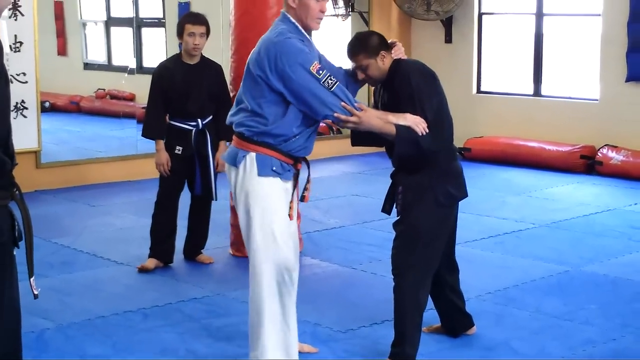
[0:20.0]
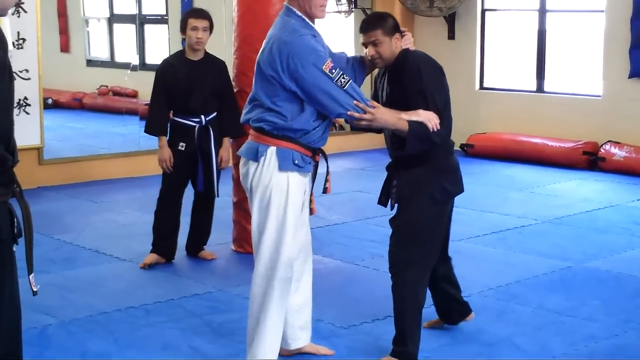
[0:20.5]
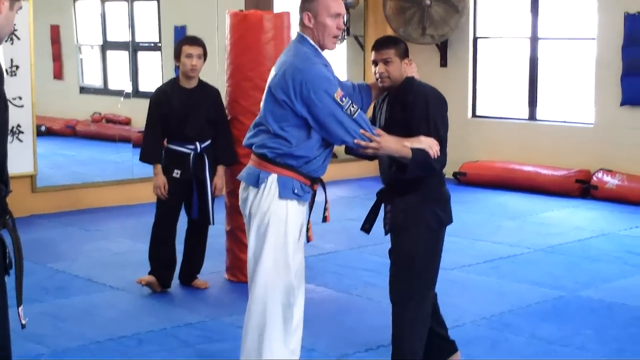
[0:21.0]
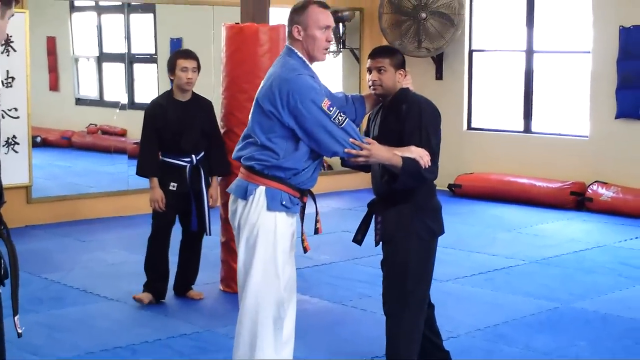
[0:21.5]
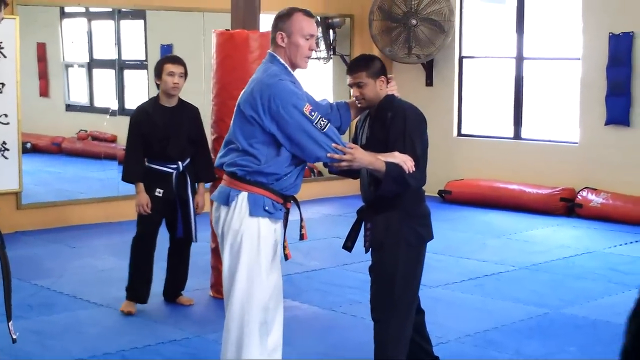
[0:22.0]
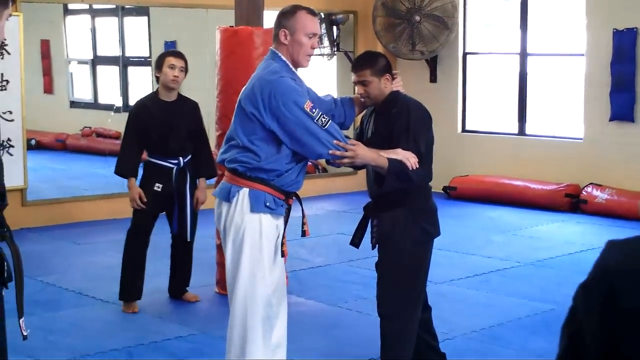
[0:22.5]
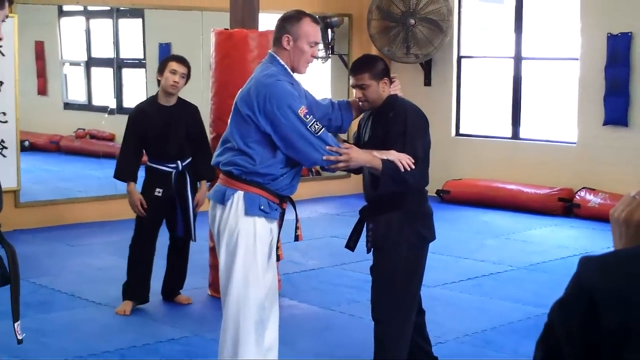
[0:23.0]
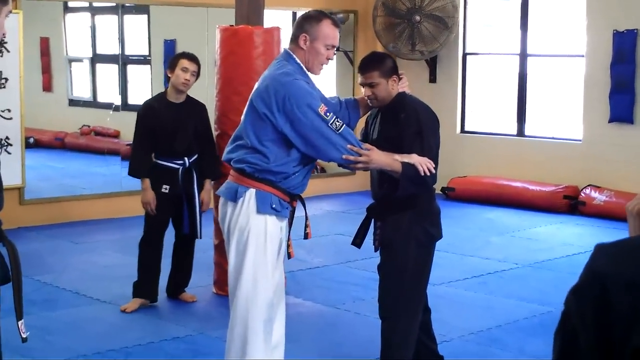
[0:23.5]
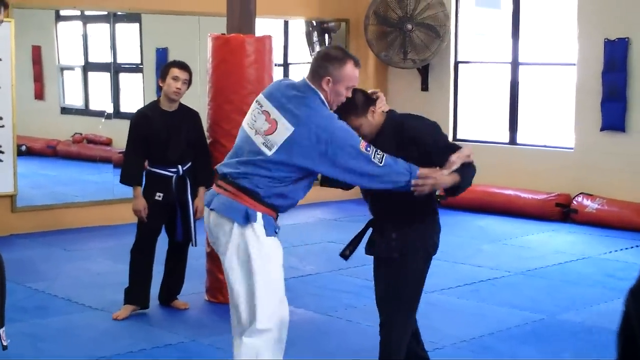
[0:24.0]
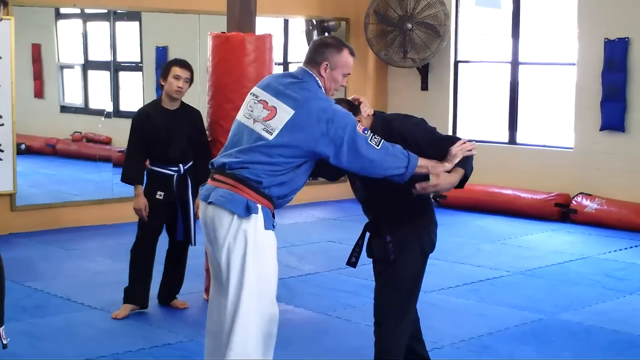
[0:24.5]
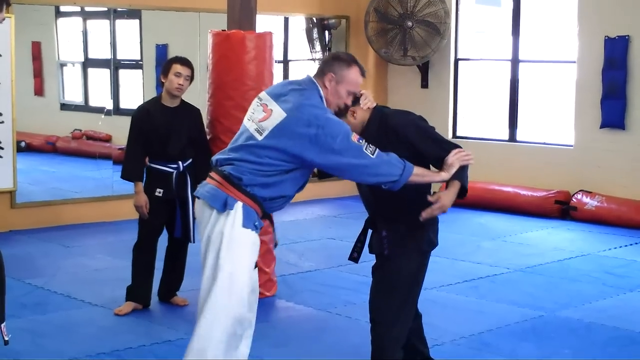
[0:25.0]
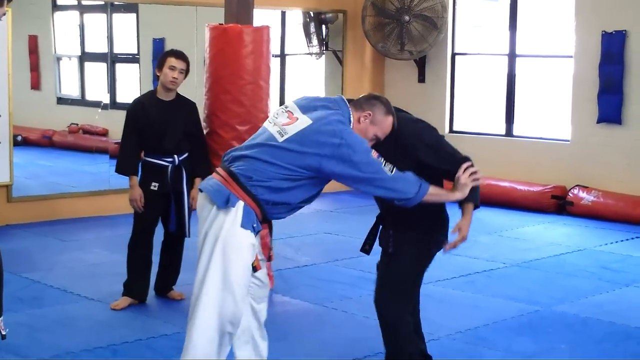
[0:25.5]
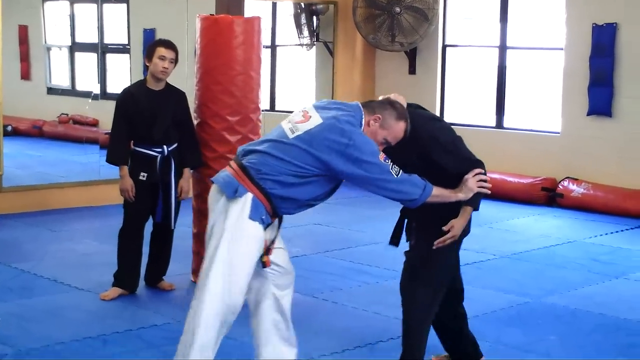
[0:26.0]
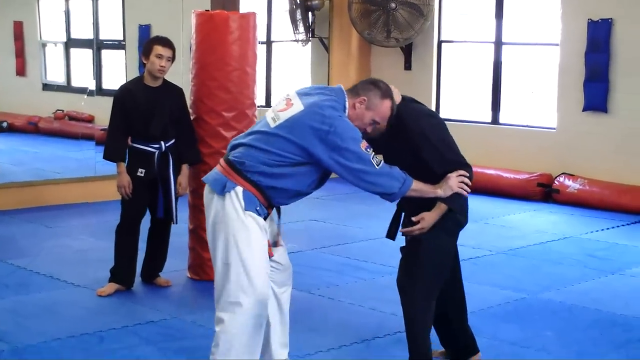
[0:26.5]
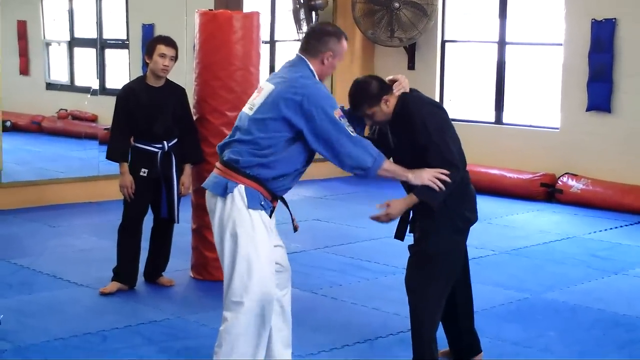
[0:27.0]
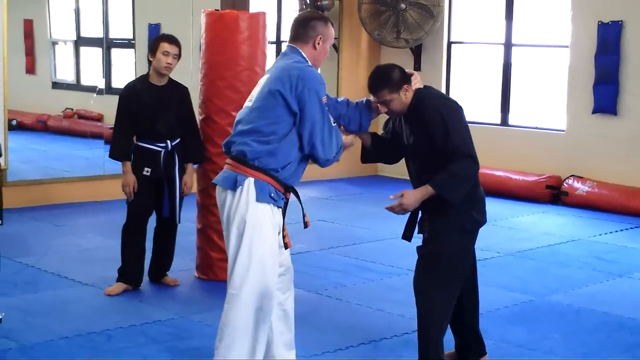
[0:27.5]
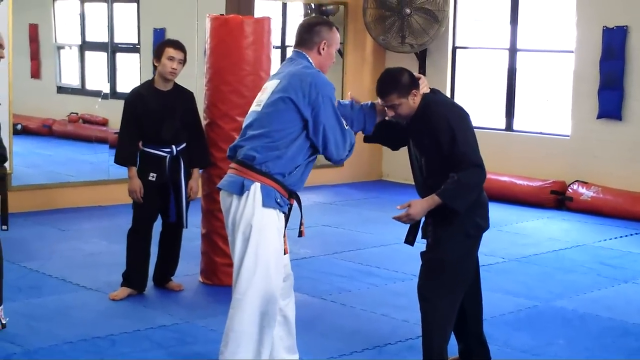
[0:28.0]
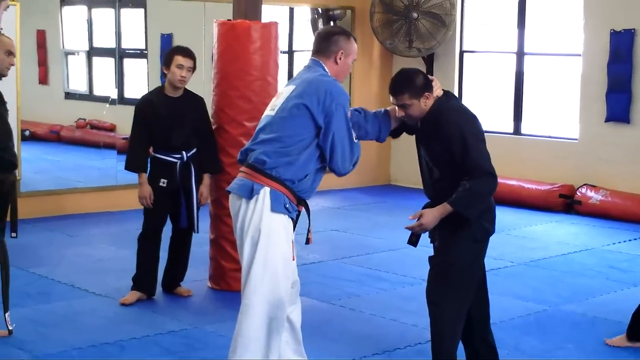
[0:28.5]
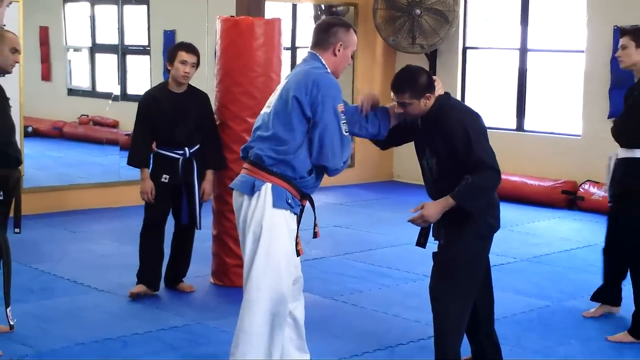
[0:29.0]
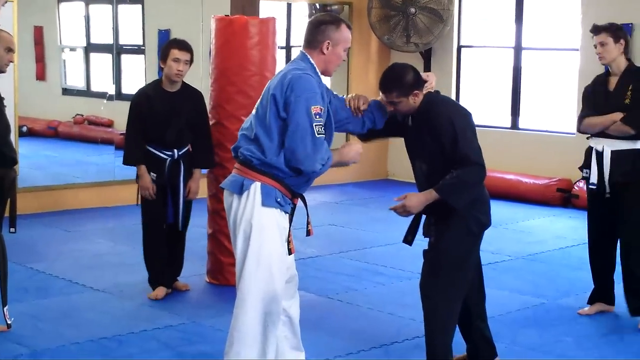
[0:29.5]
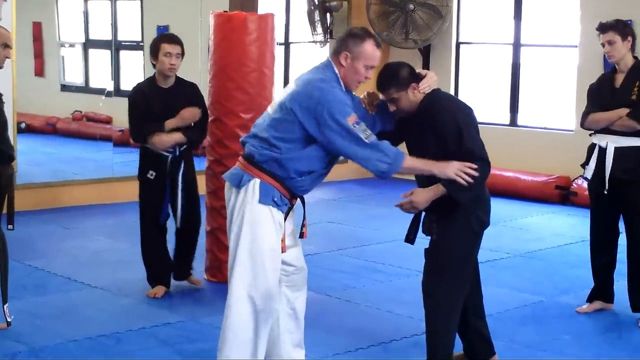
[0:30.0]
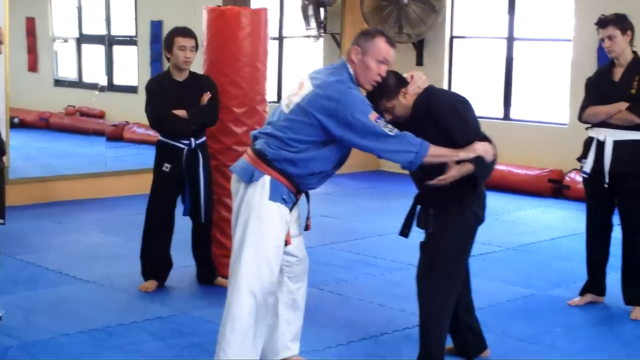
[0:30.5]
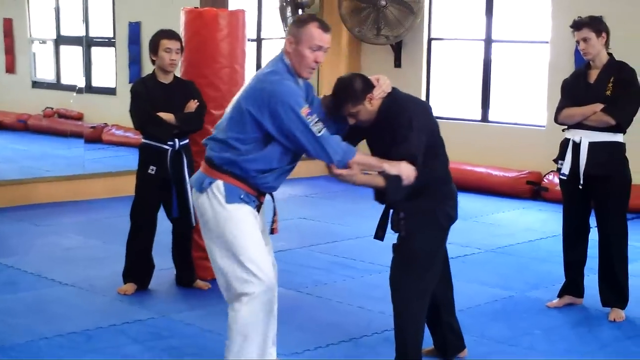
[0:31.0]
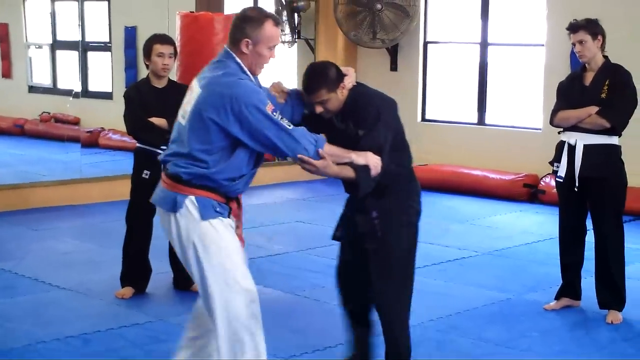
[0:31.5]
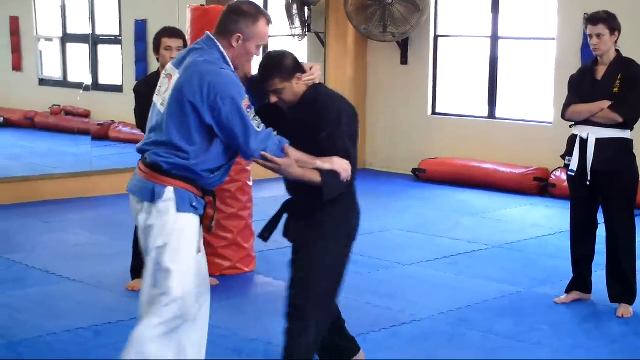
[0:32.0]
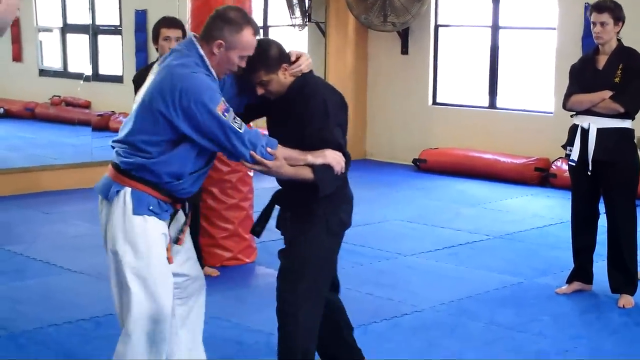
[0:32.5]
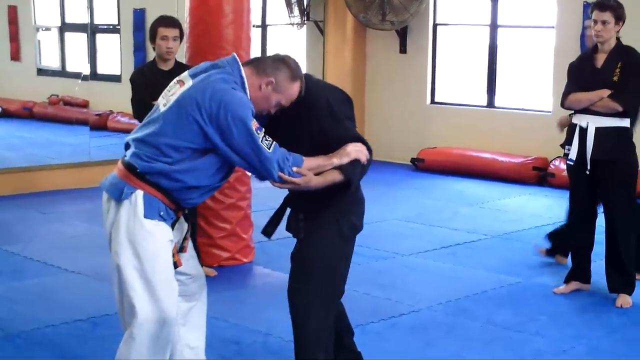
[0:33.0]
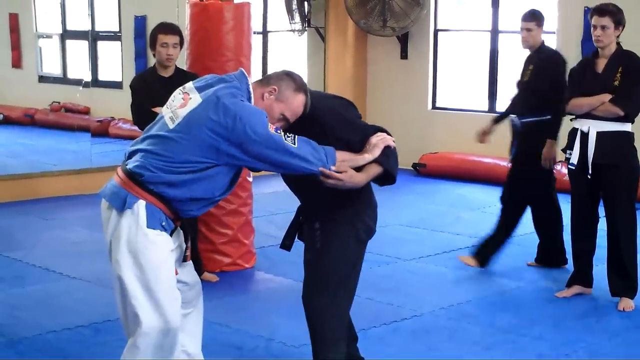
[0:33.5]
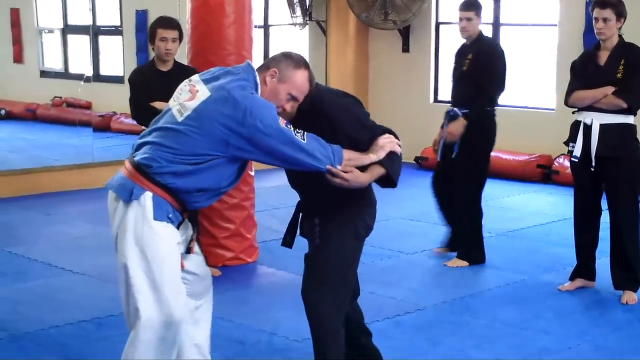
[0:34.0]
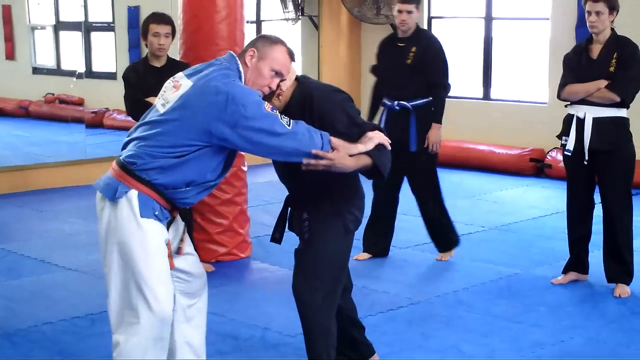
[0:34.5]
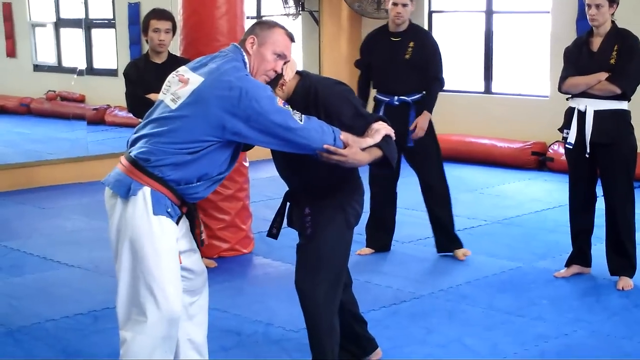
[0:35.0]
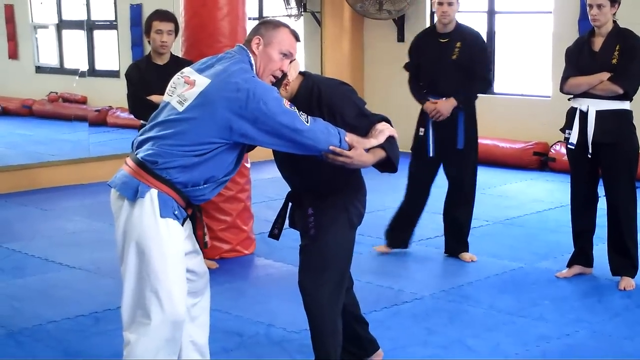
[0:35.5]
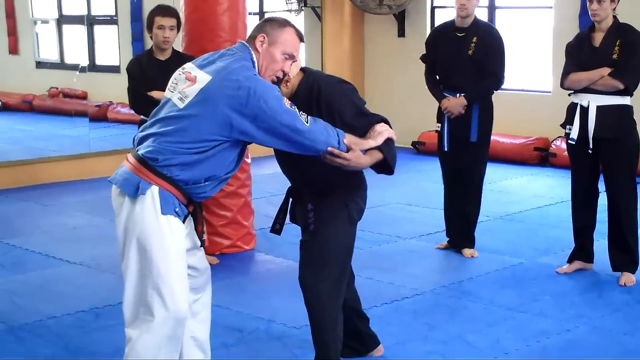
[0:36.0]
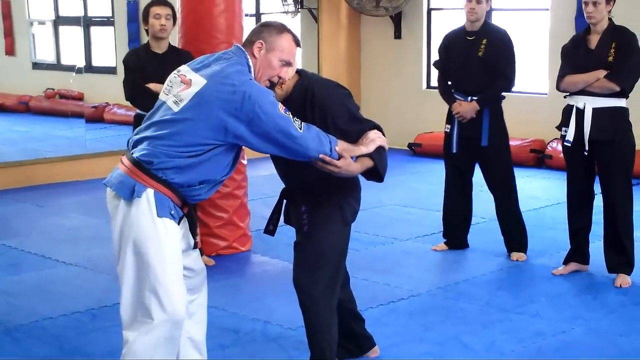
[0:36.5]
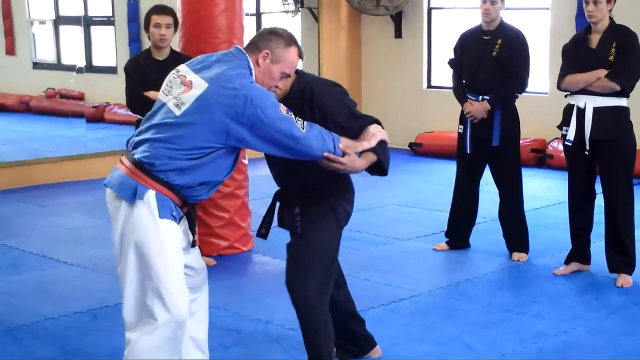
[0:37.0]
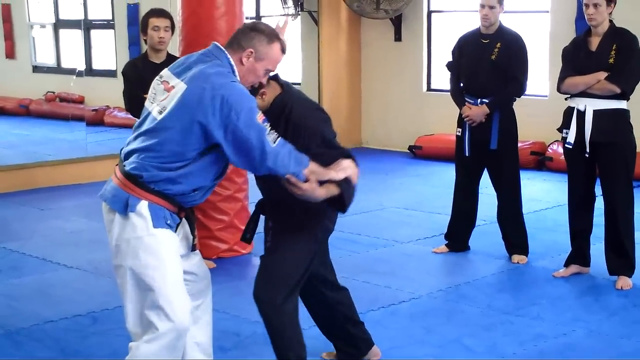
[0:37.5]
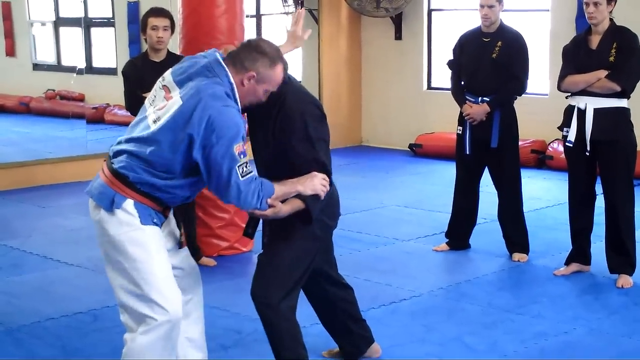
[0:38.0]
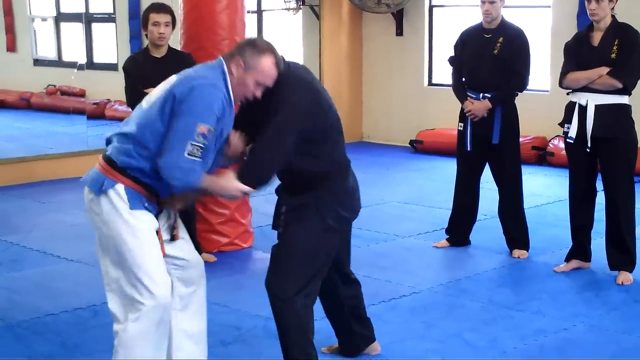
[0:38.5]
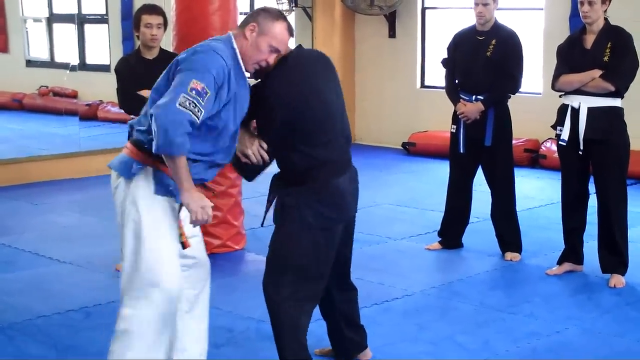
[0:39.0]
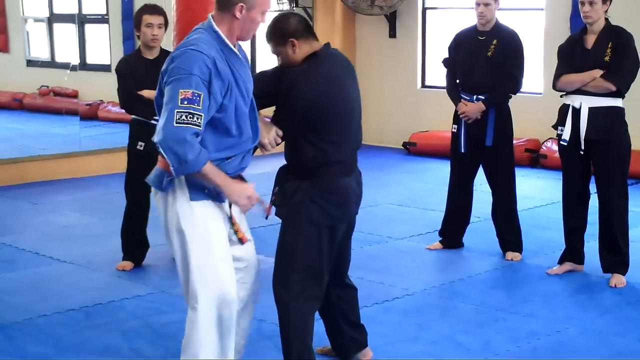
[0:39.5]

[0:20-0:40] A martial arts instructor demonstrates a movement on a student while explaining it to the rest of the men in the class. The students wear black outfits with belts of various colors. The instructor is very tall and wears a light blue jacket, a few belts around him, and white pants. He brings his arm around the student while pushing the student's arm away, looking up and speaking as he instructs the other students on the move. The gym has a window and a few mirrors, with a framed piece of art containing writing in a different language between the mirrors. The floor is blue and cushioned, and red bumpers line the column in the middle of the gym as well as the sides of the gym underneath the windows. A large black fan is in the room.